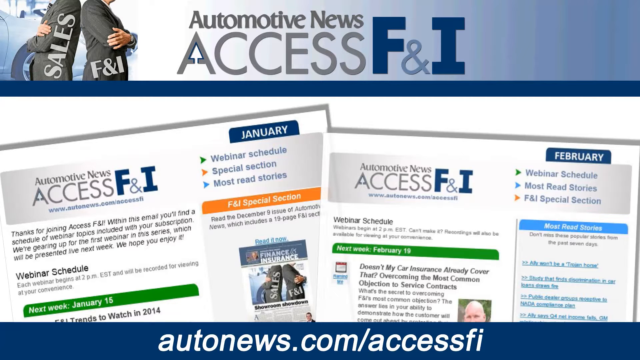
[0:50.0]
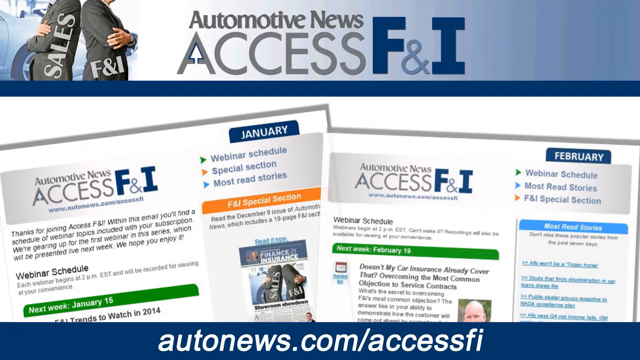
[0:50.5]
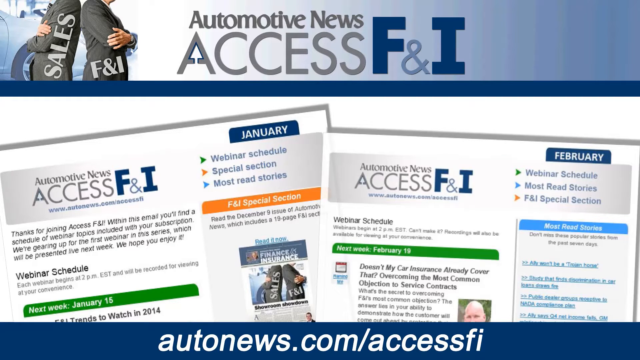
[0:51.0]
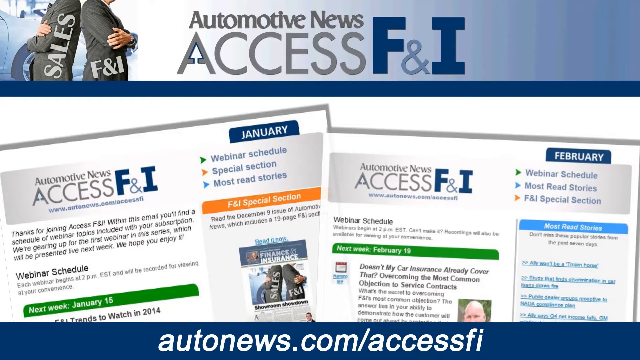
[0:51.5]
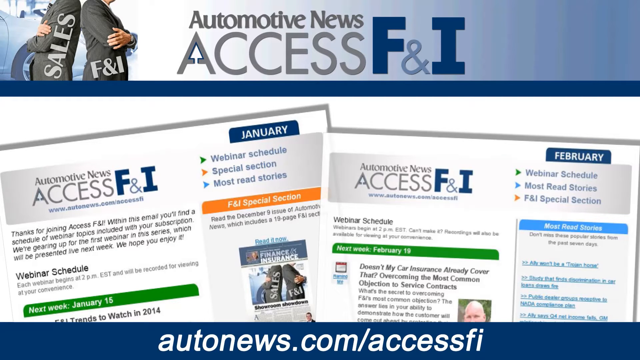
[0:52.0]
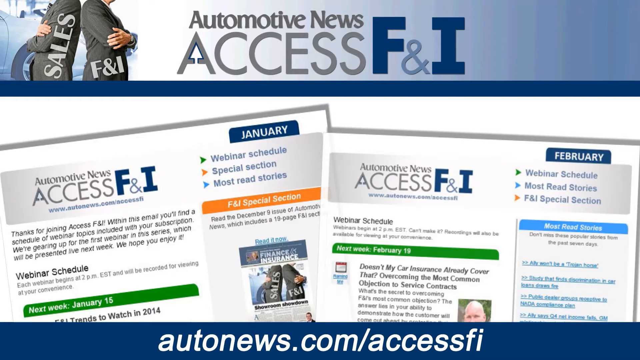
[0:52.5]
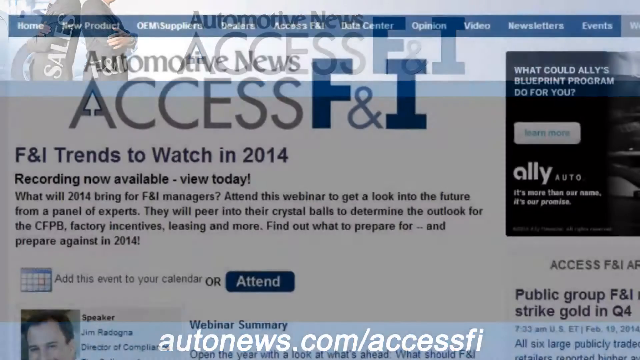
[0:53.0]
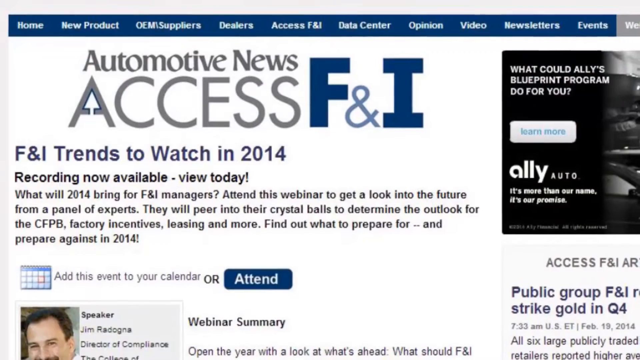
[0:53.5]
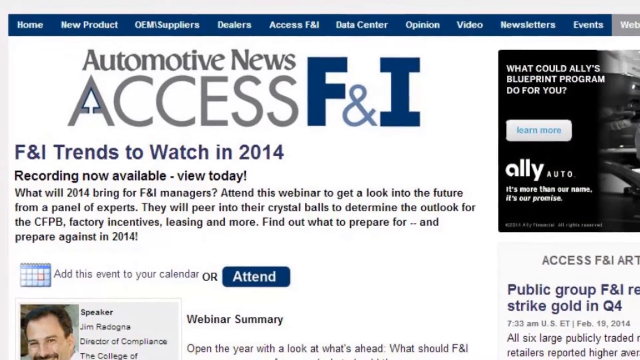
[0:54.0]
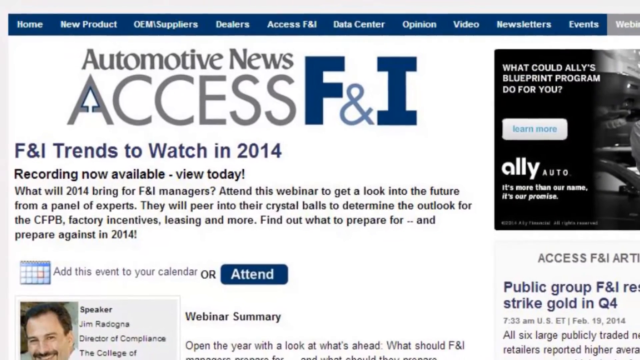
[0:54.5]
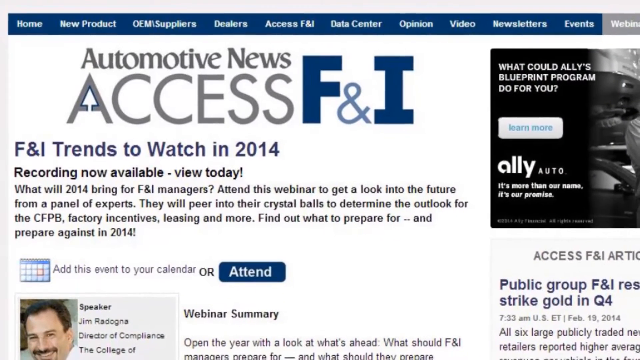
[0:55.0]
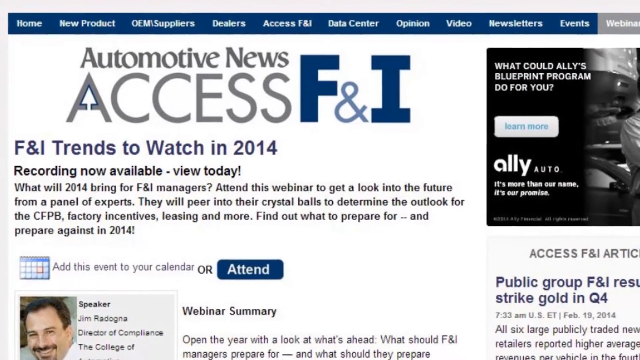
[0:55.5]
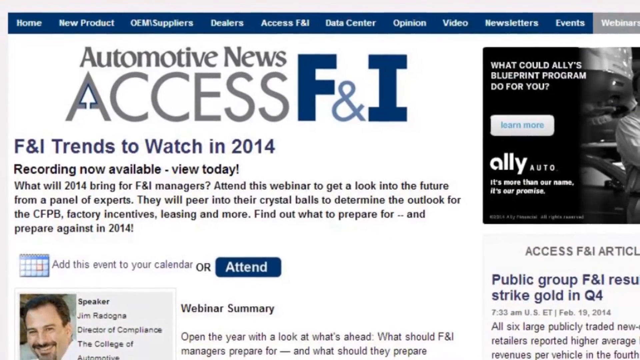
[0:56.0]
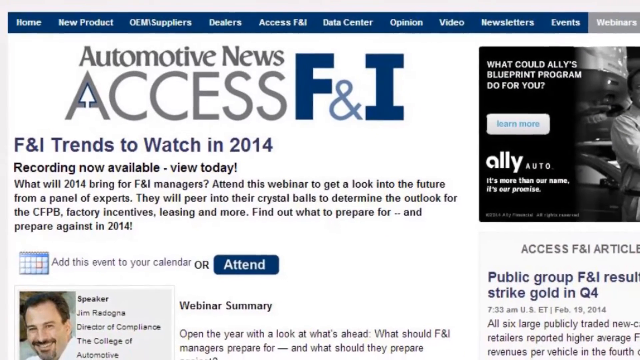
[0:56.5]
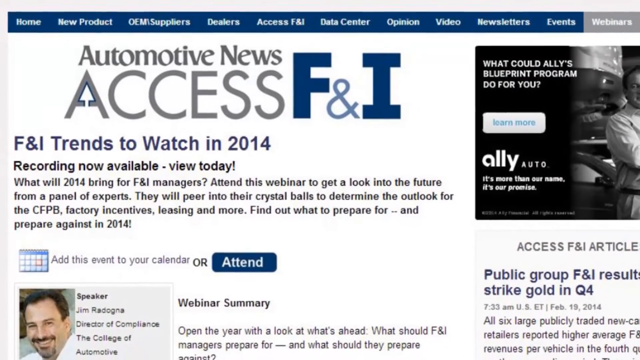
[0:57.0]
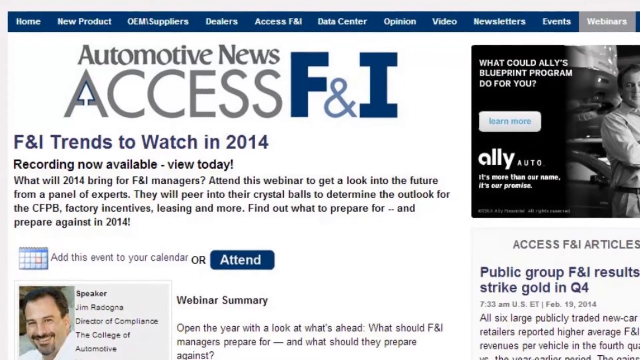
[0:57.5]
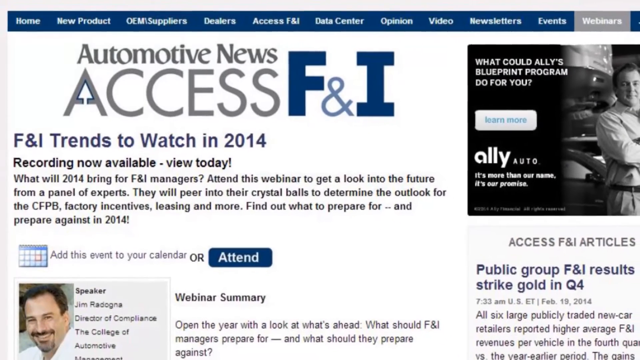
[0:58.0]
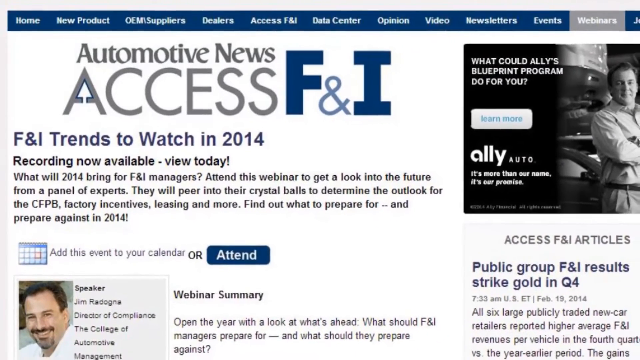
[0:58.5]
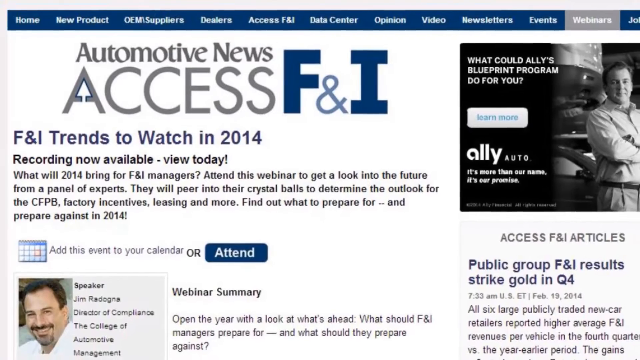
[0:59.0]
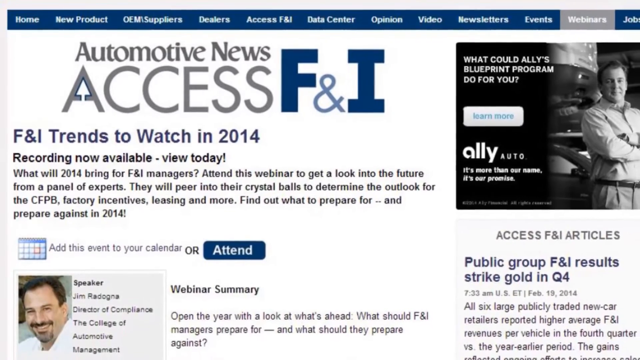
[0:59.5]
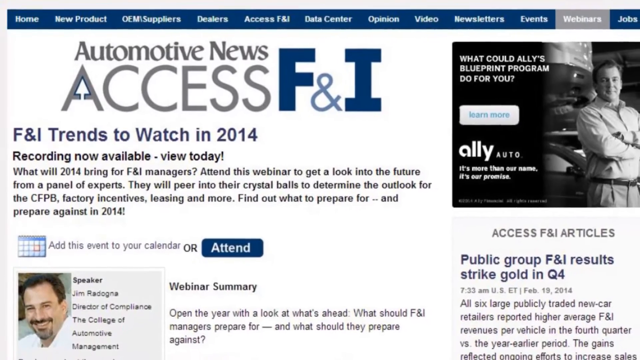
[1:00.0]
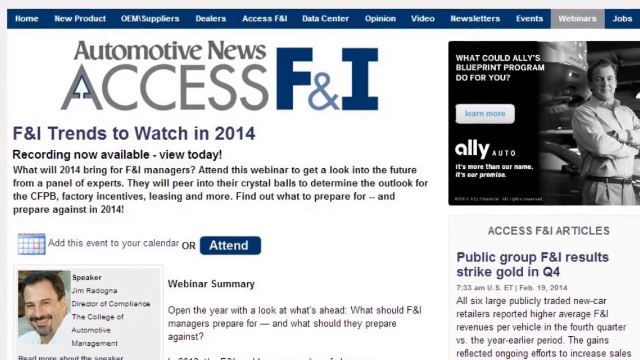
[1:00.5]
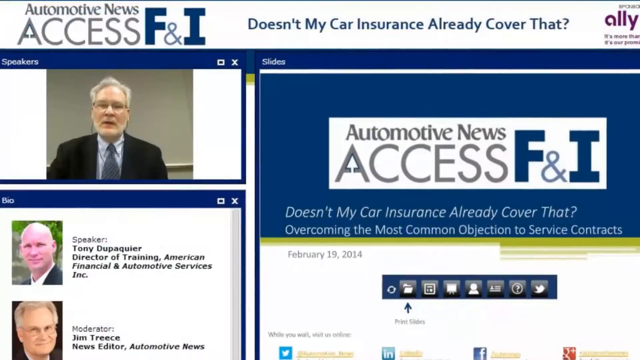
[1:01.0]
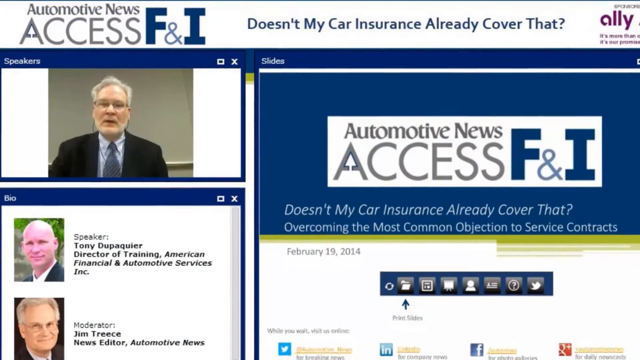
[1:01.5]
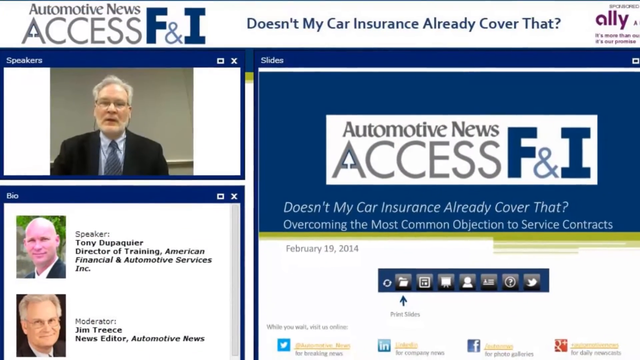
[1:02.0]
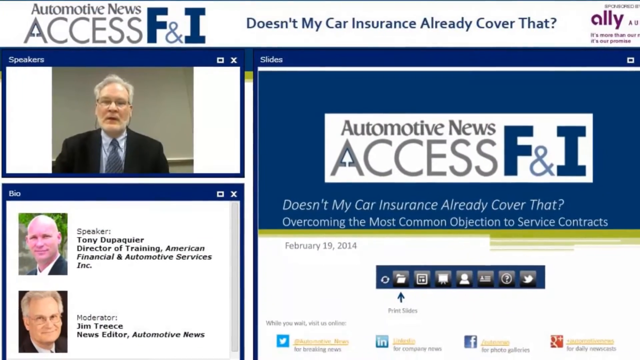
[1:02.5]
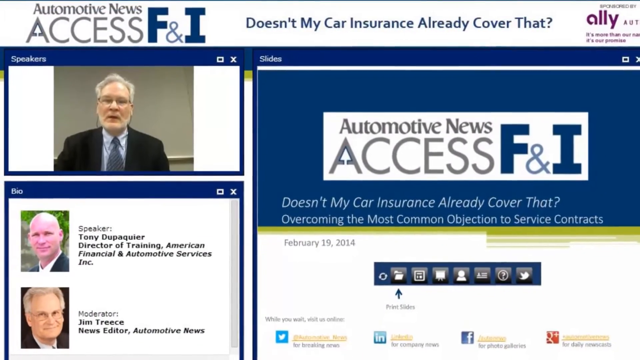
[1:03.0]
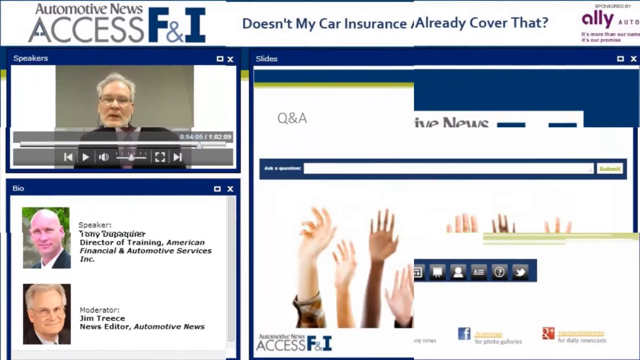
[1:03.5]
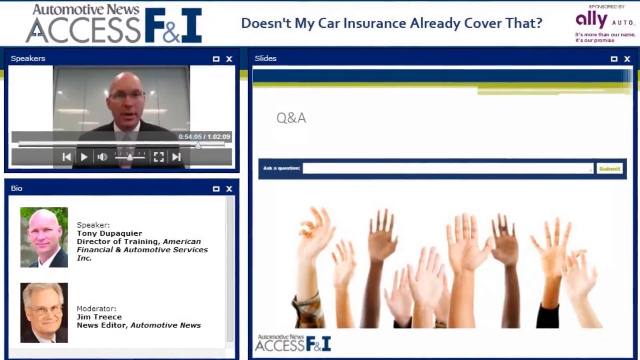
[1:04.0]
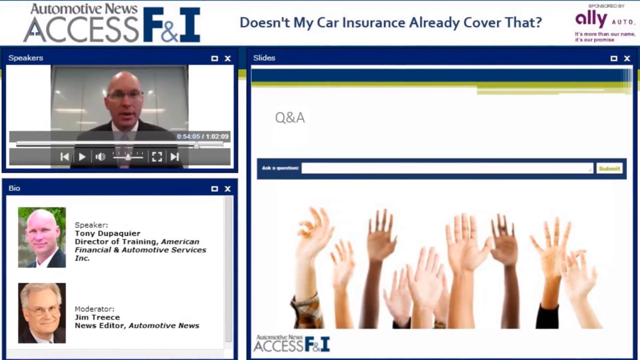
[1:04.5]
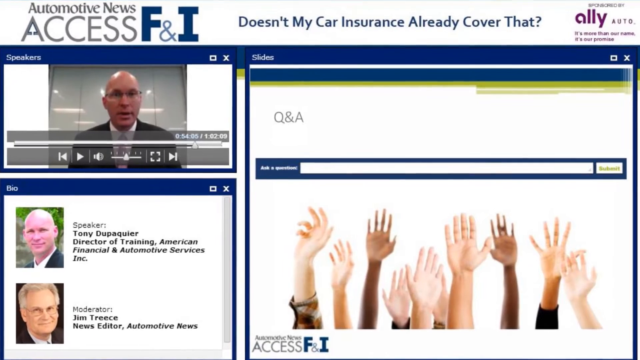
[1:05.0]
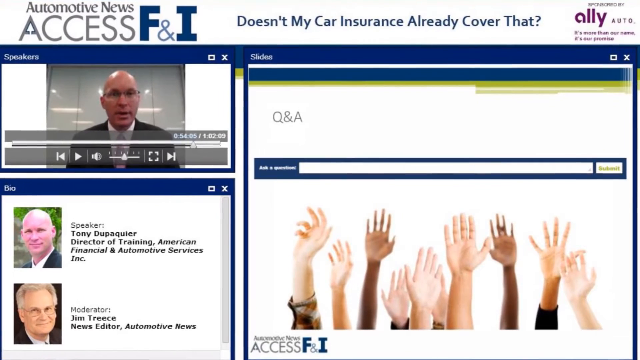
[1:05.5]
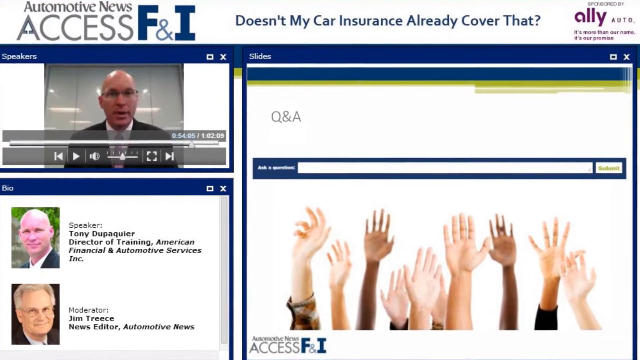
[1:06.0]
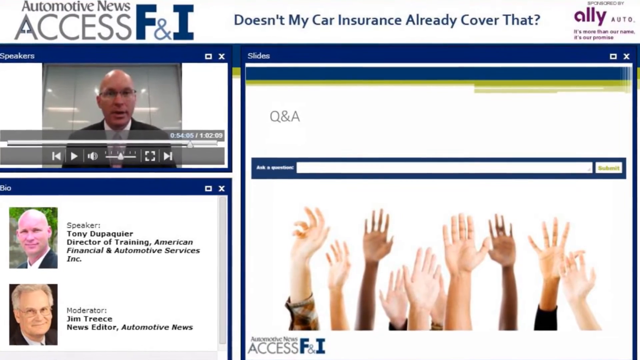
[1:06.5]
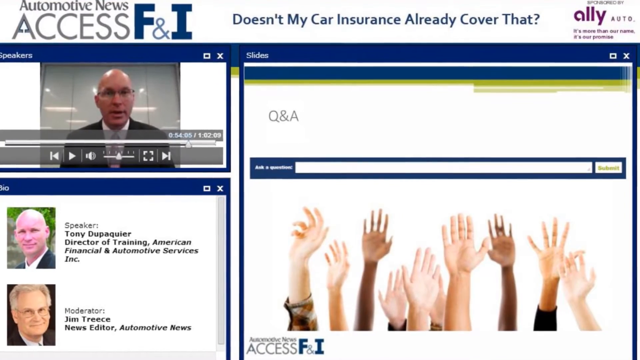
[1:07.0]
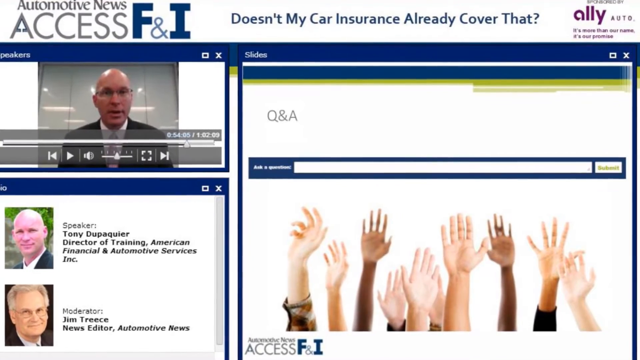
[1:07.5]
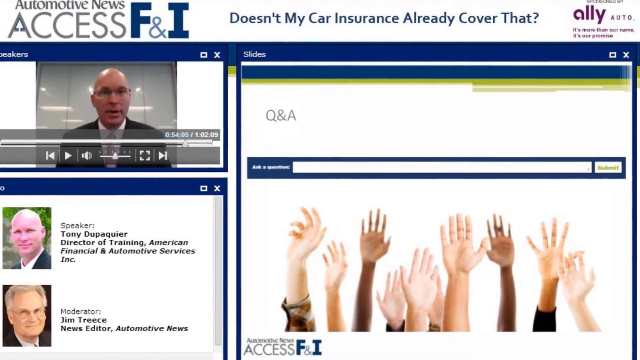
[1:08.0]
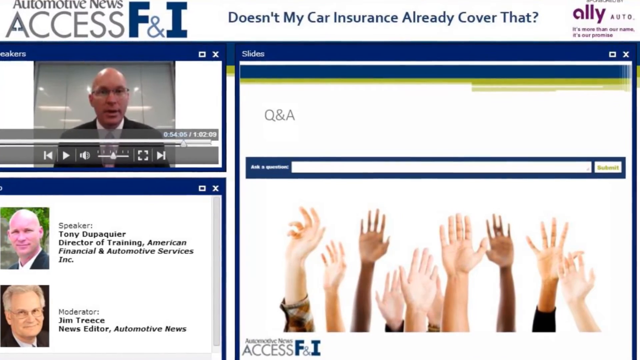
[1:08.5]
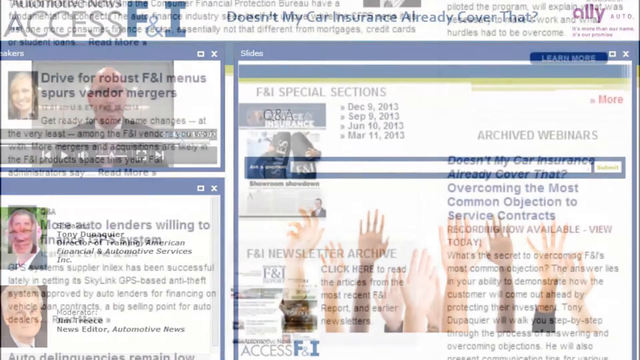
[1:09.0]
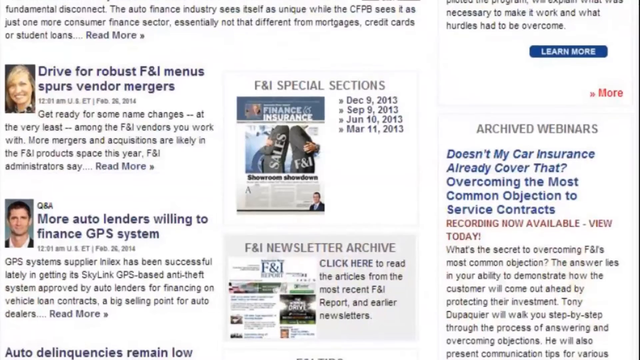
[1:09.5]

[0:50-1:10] Two website pages appear side by side, one from January and one from February. At the bottom of the screen, white text on a blue background reads "autonews.com/accessfi." What looks like a zoom out of the Automotive News Access F&I website follows, and several different screens of the website are shown: some with article headers, others advertising webinars, and some showing video availability. Five different images are shown in this stretch.